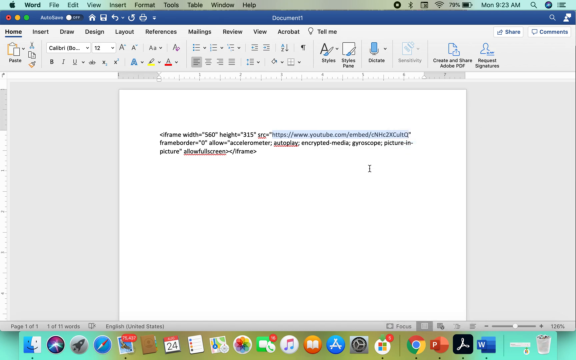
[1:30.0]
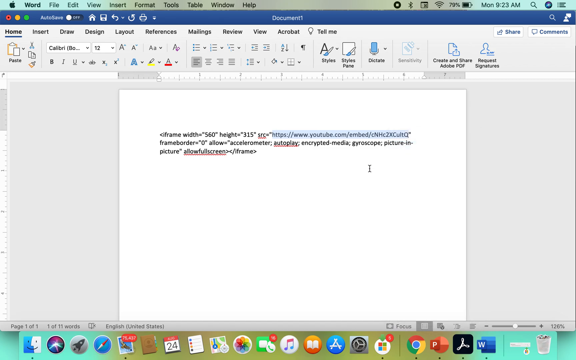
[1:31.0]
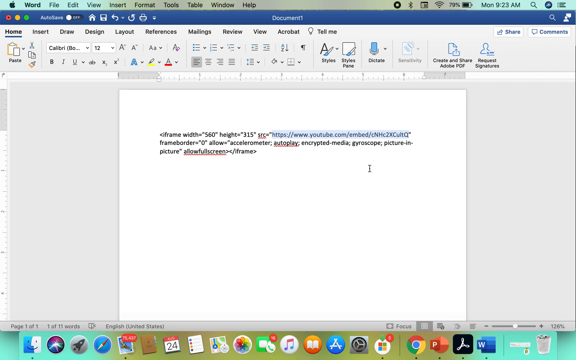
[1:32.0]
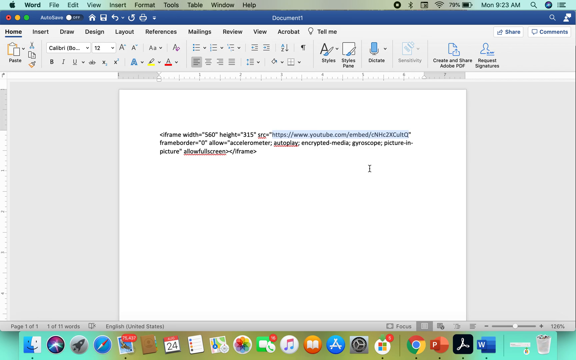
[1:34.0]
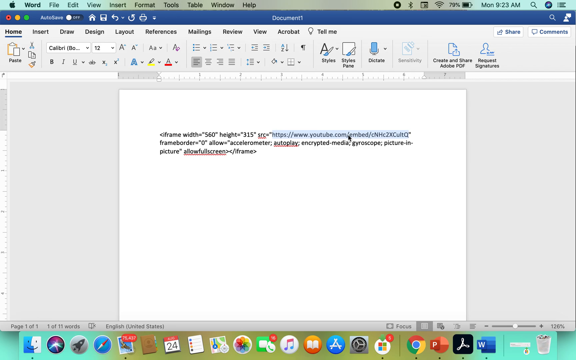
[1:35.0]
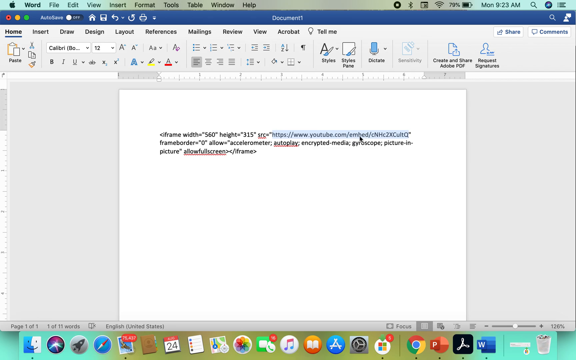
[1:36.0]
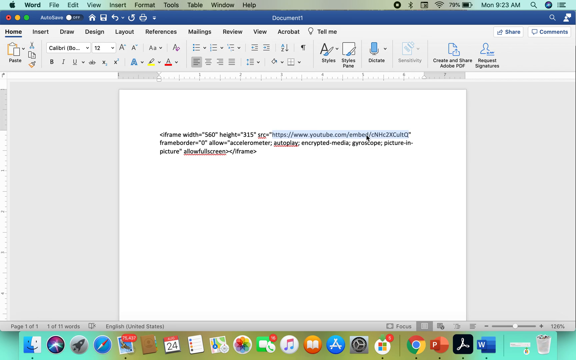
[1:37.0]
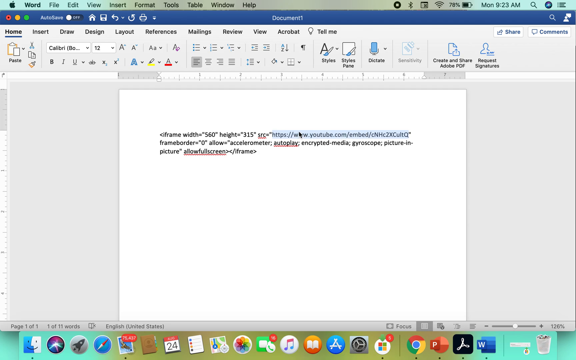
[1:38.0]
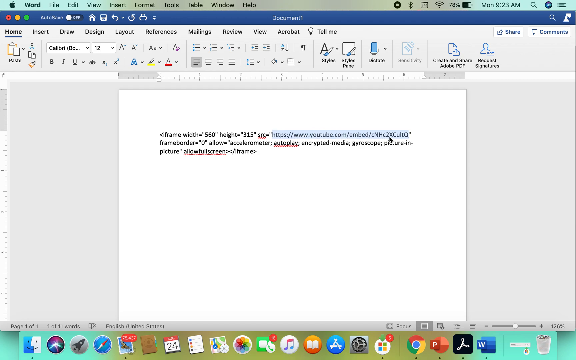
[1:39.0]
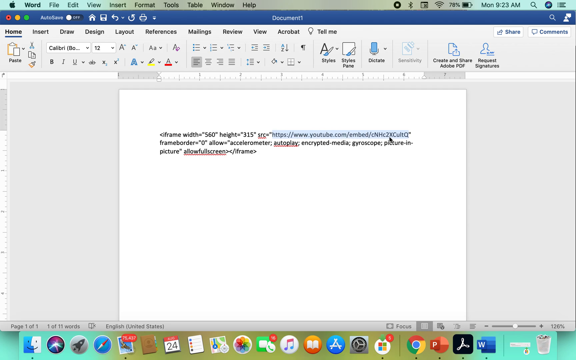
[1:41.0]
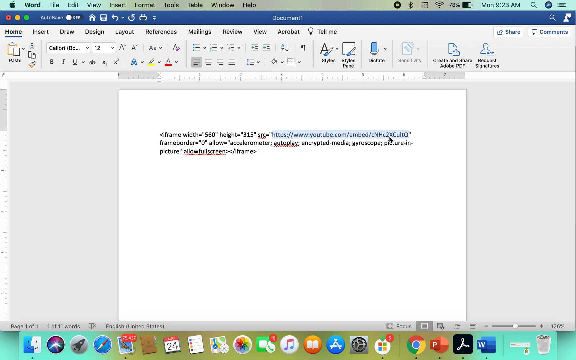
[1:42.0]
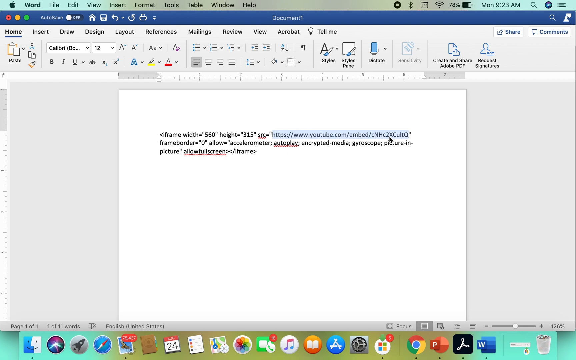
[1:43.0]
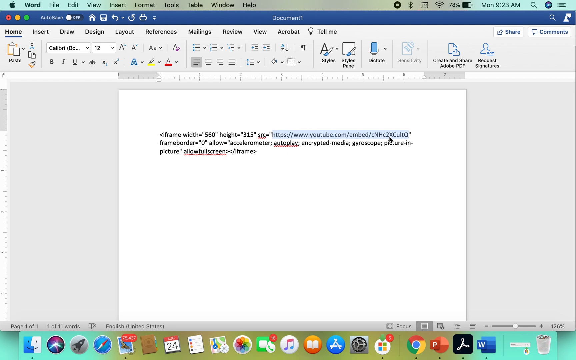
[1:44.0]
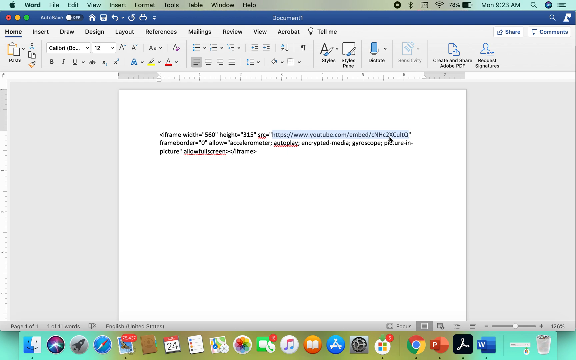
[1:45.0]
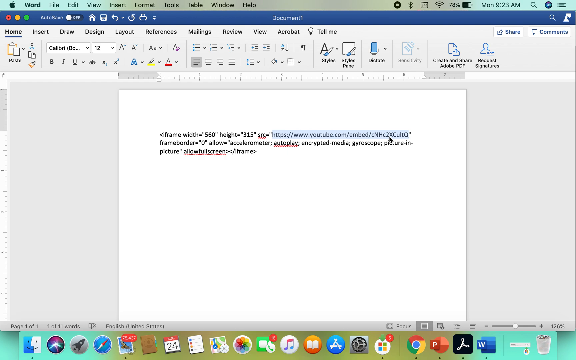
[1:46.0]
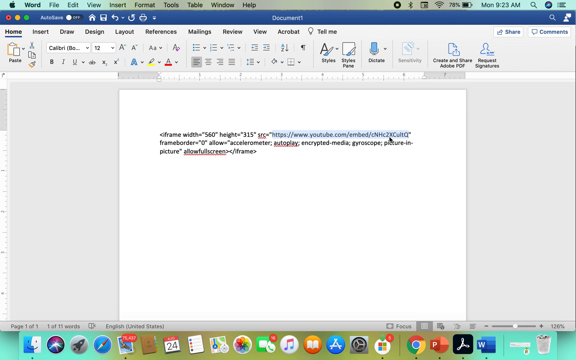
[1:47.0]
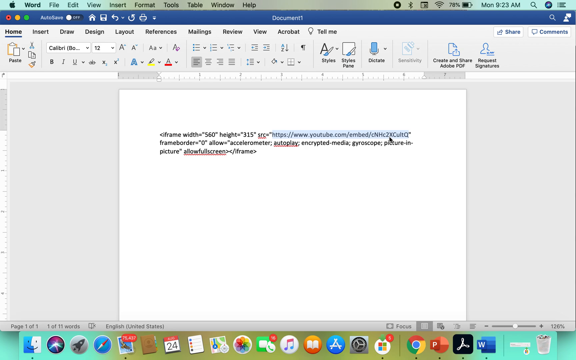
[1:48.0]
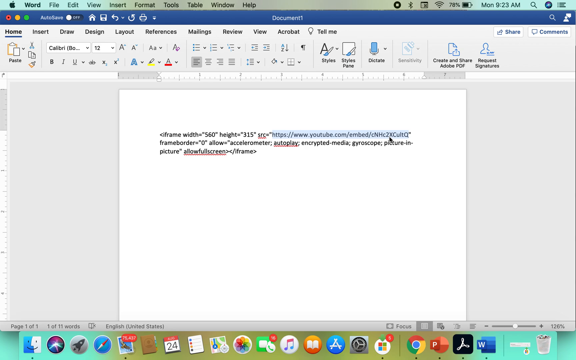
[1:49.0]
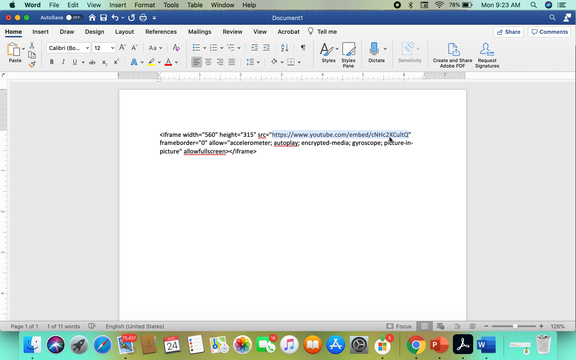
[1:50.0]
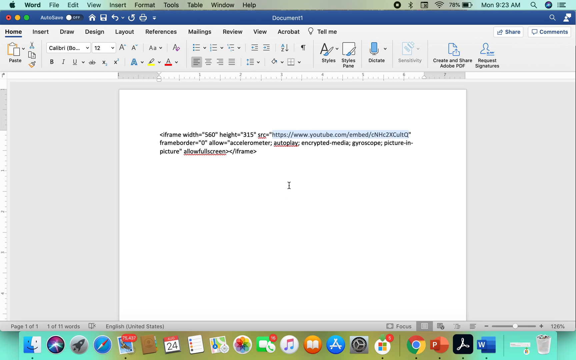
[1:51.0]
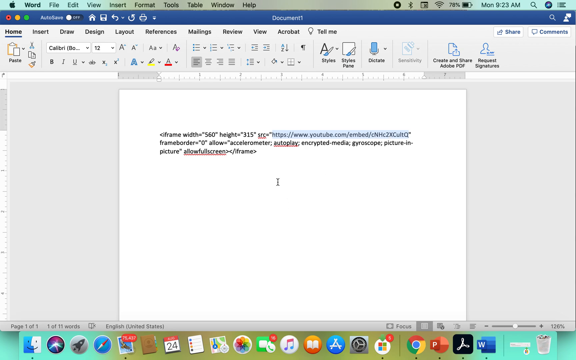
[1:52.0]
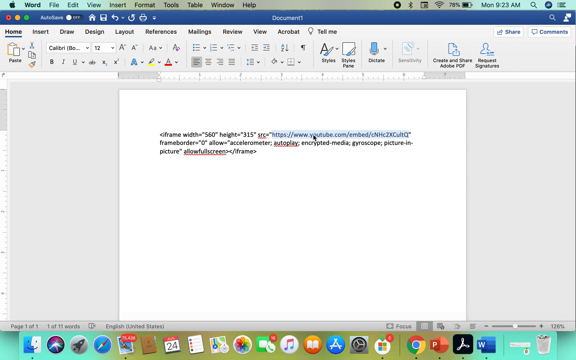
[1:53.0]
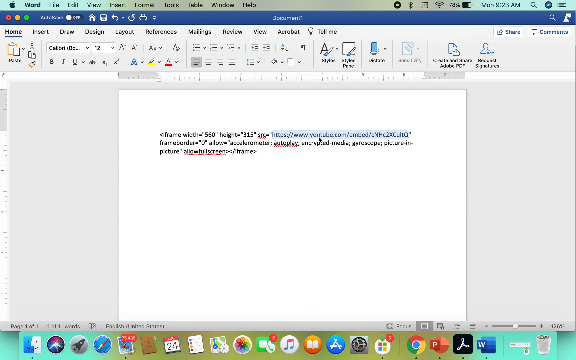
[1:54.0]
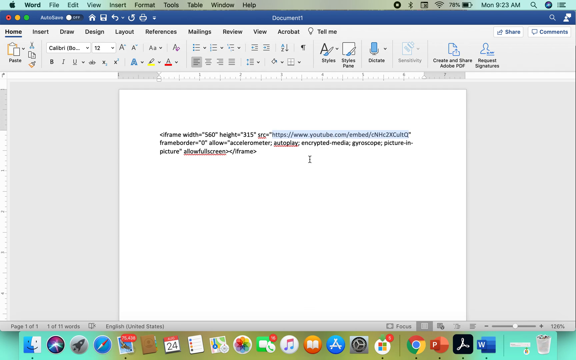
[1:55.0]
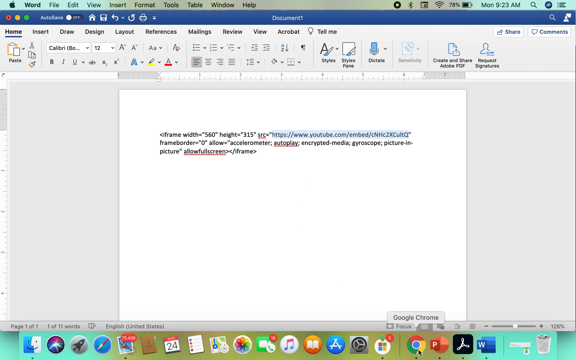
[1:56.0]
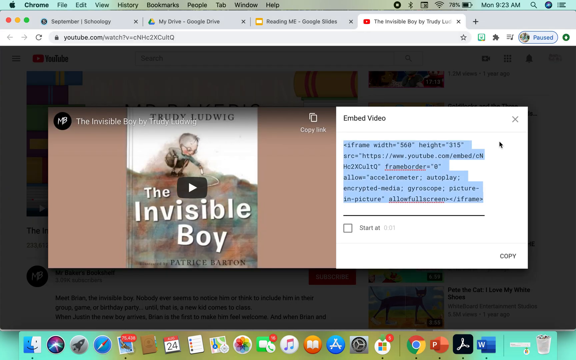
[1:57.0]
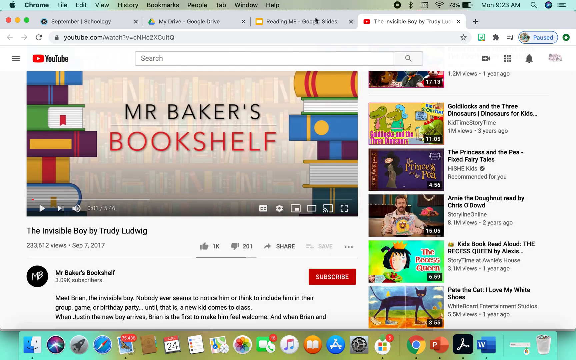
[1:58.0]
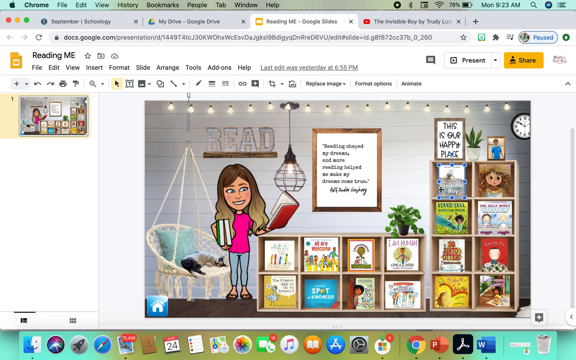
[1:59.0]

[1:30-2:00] Back in the Microsoft Word document, the website address is still highlighted, and the user moves the cursor over the URL a few times. The page stays like this for about 10 seconds with nothing happening. The cursor then moves to the middle of the document and immediately back to the URL, hovering over it a few times again. The user clicks the Chrome icon on the system tray, and the Safari browser appears on screen with the embedded video window. They click X on that window and go back to the Google Slides editor, moving from the Word document to YouTube and then to Google Slides.